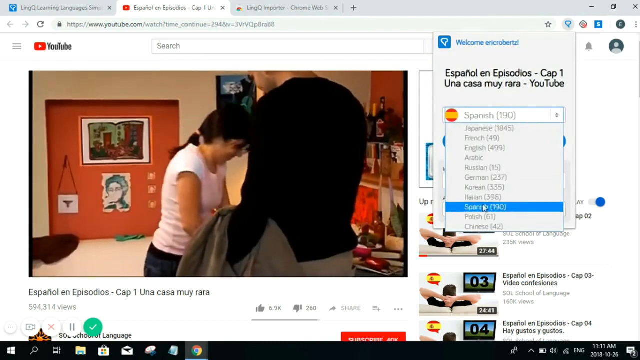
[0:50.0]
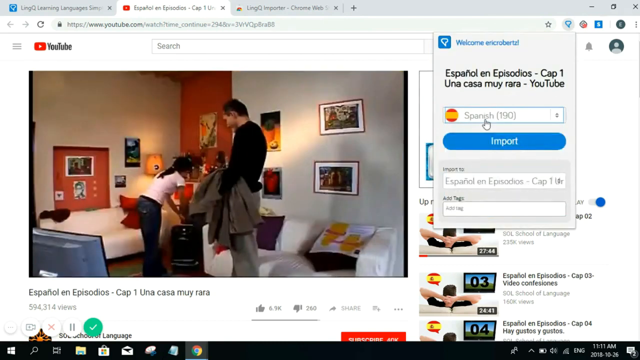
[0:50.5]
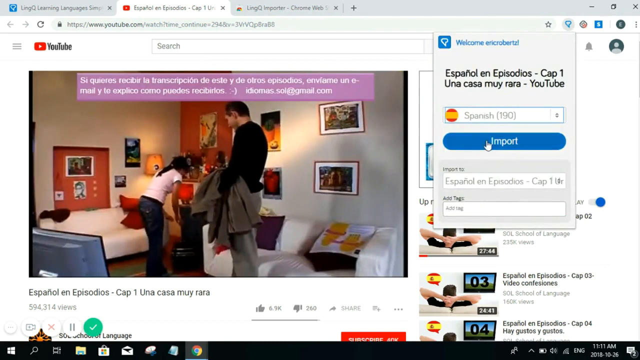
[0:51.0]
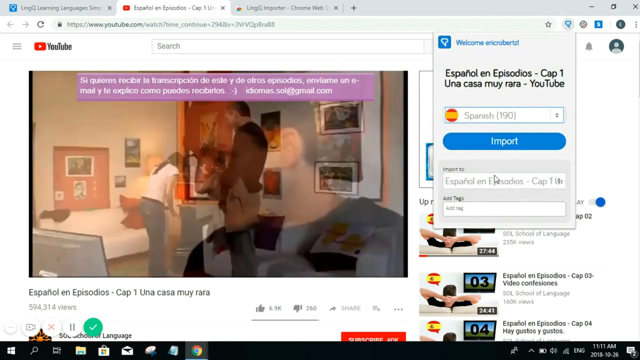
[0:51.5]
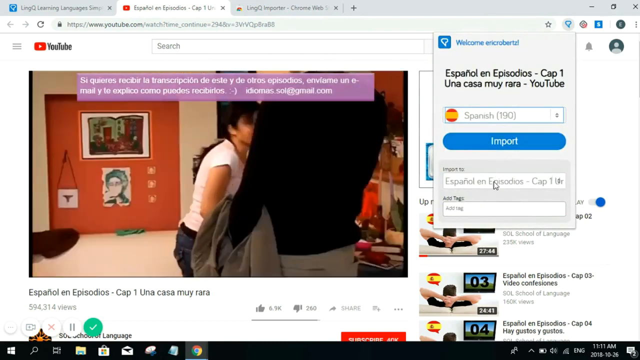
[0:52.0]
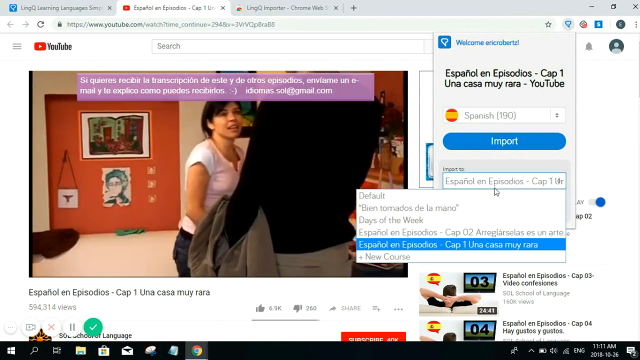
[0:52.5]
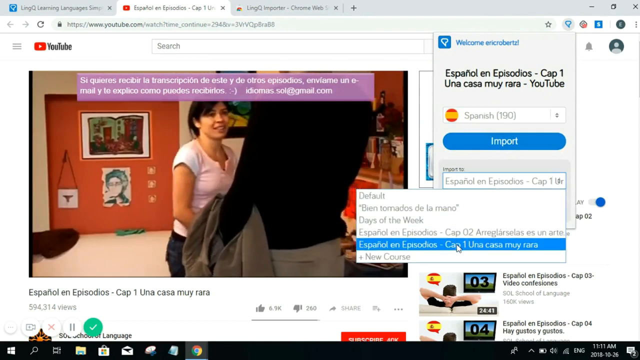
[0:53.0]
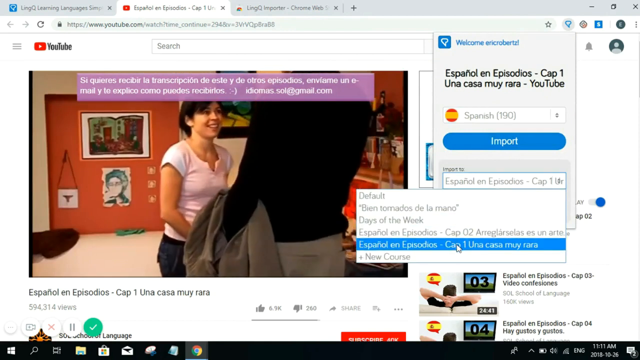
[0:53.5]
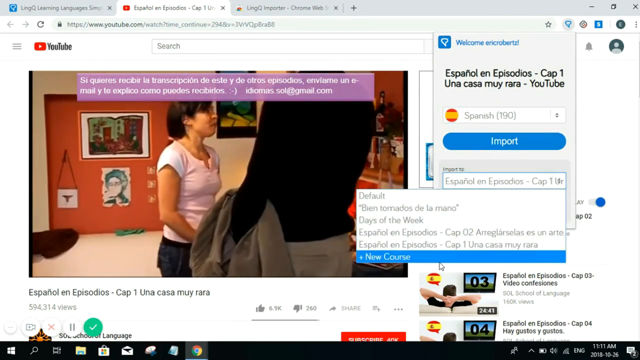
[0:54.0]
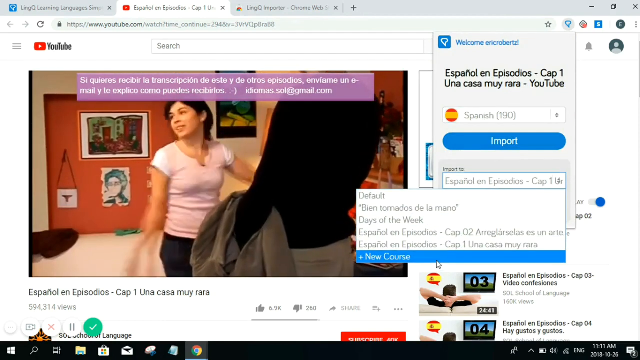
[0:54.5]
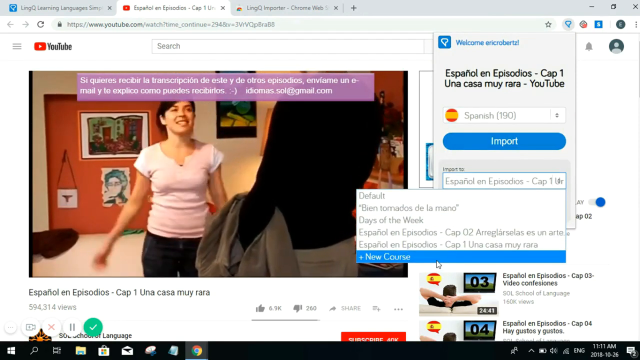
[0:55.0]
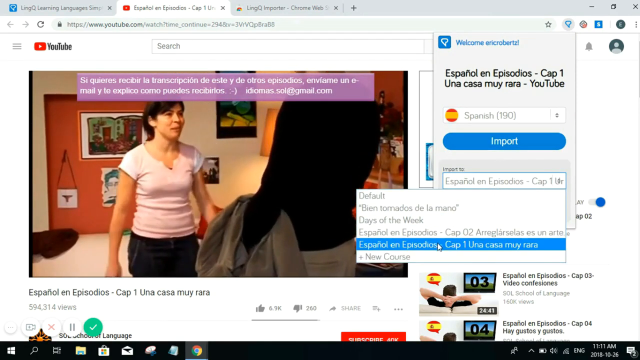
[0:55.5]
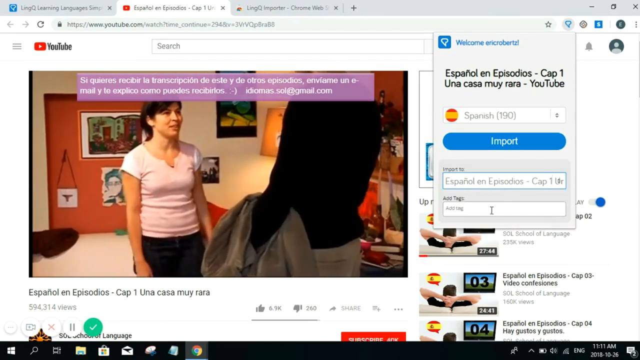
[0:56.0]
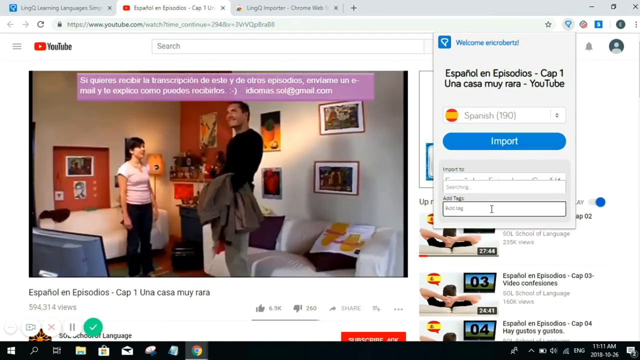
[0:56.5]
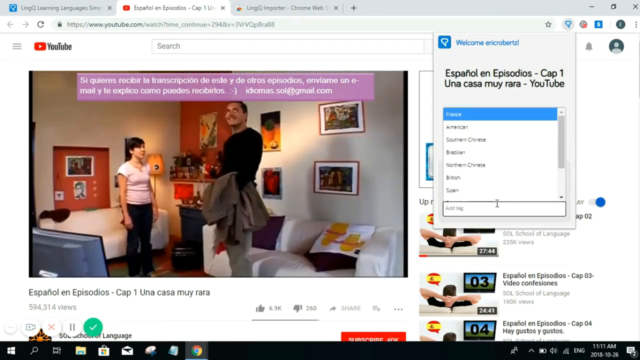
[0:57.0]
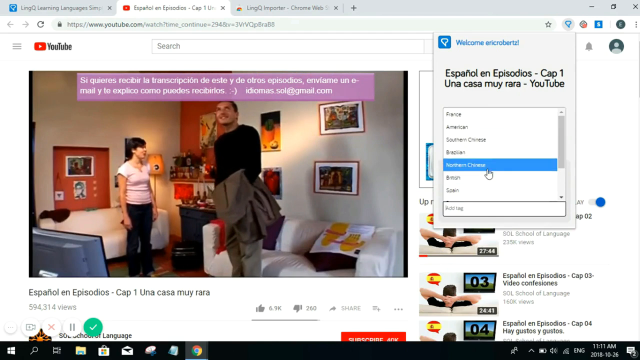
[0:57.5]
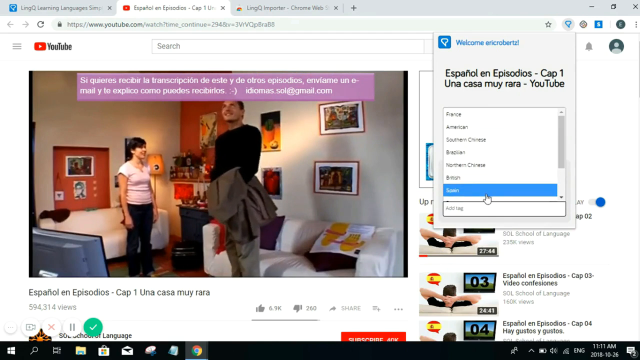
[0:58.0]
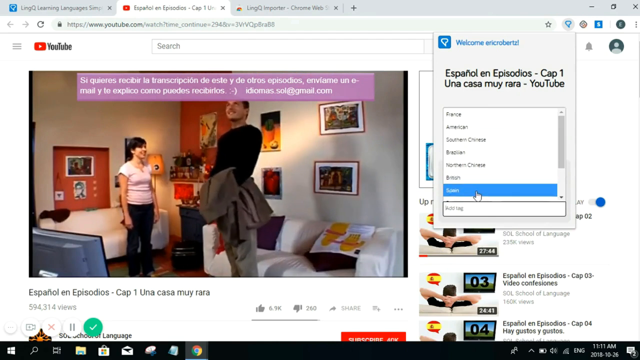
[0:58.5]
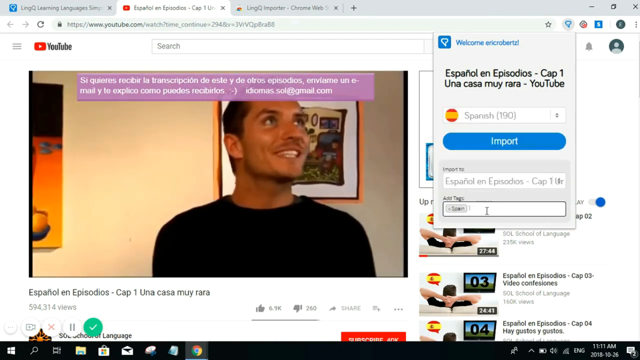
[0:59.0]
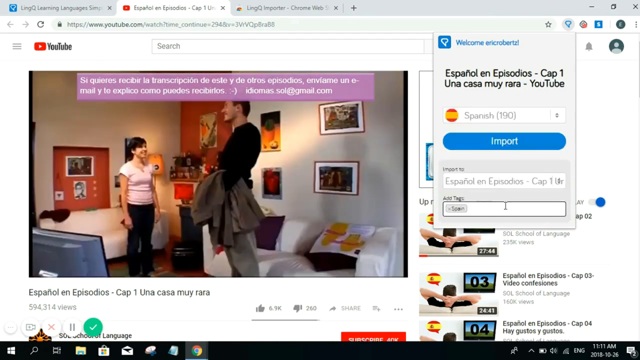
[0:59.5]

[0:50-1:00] The Spanish show is playing on YouTube again, and the person appears to be using the Lingq browser extension. He selects Spanish, hits import, and then chooses which episode he wants to import. He also has options to add tags. The show features a man and a woman: the woman wears black pants and a pink sleeveless blouse, and the man wears what appear to be tan pants and a long-sleeved black shirt.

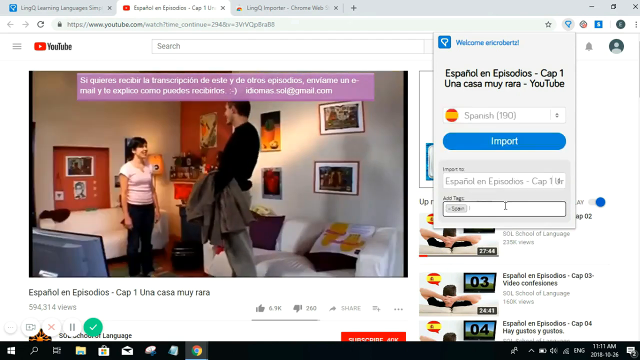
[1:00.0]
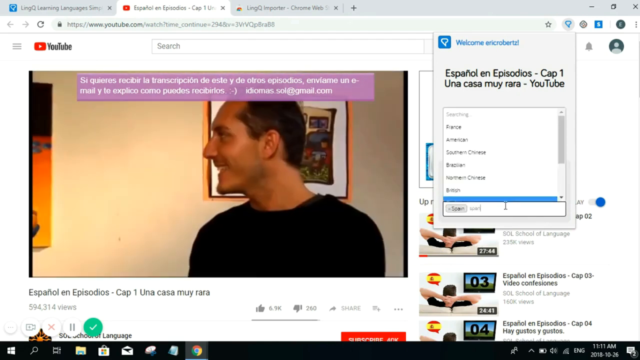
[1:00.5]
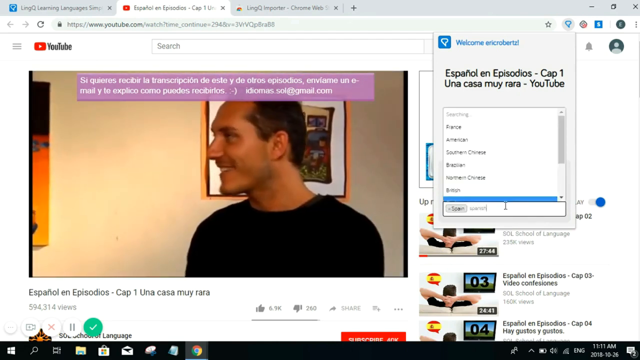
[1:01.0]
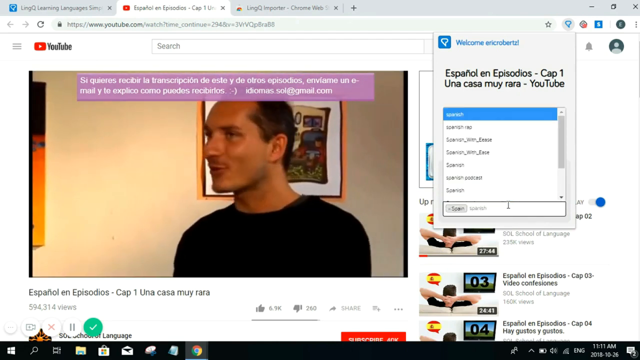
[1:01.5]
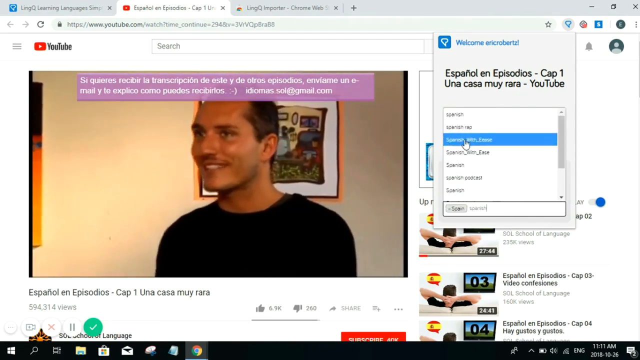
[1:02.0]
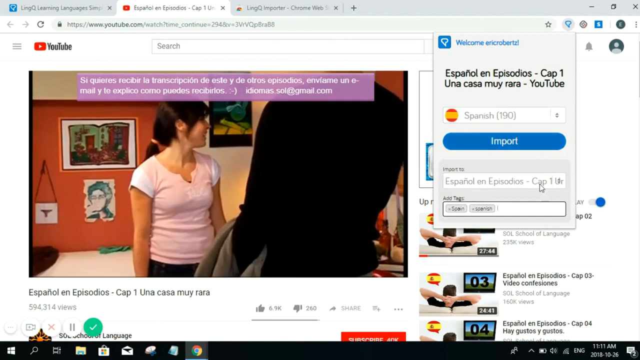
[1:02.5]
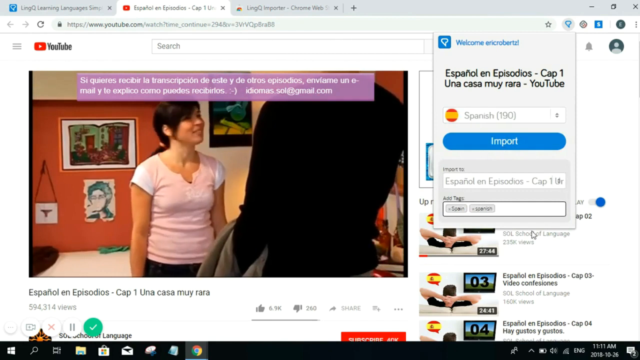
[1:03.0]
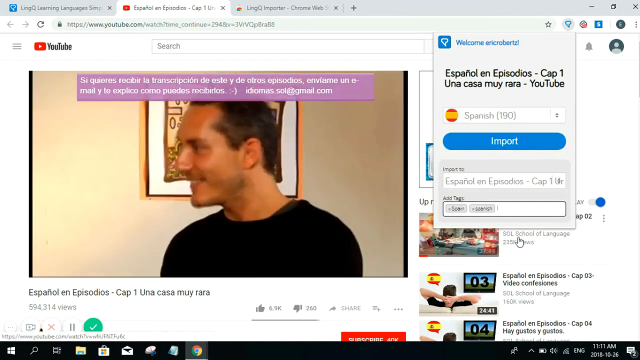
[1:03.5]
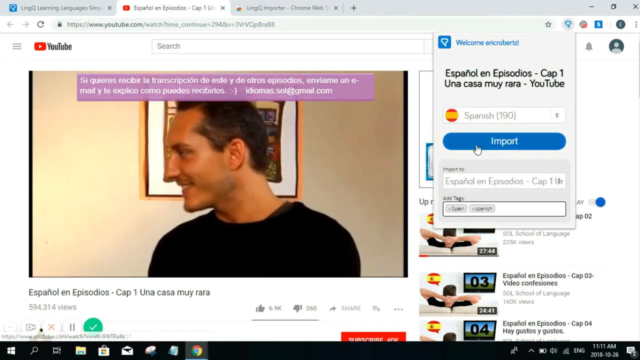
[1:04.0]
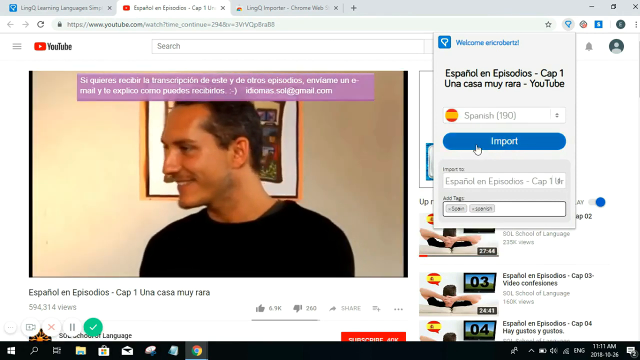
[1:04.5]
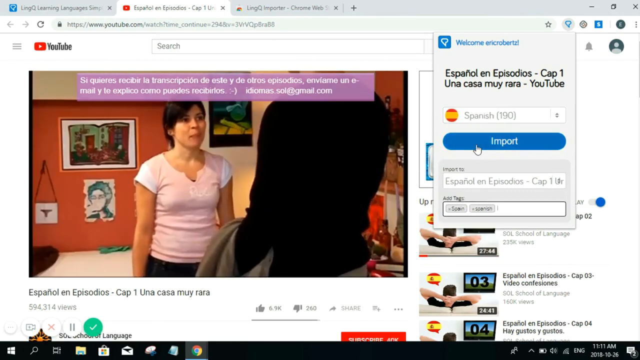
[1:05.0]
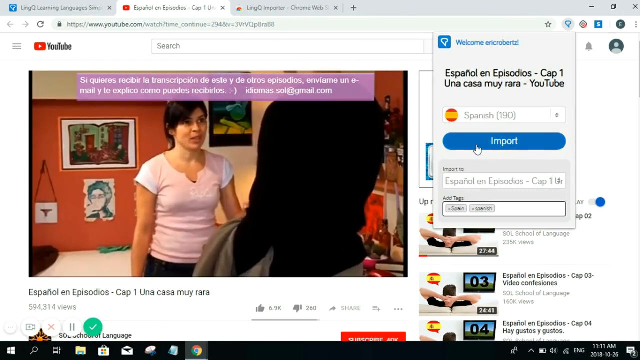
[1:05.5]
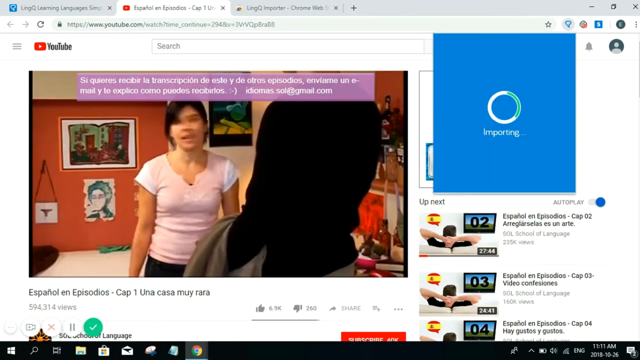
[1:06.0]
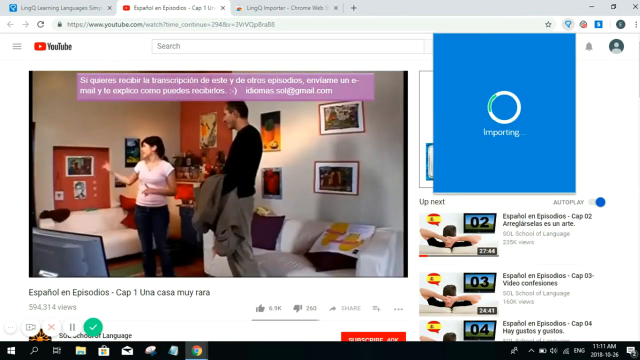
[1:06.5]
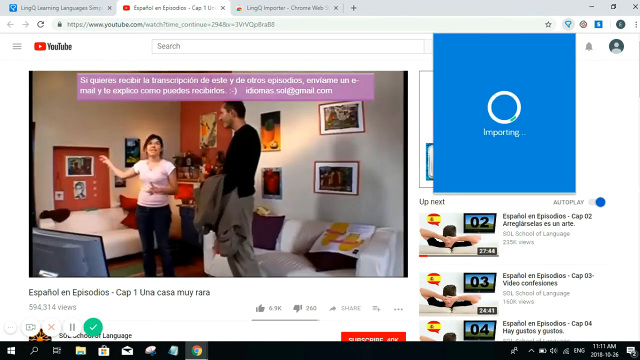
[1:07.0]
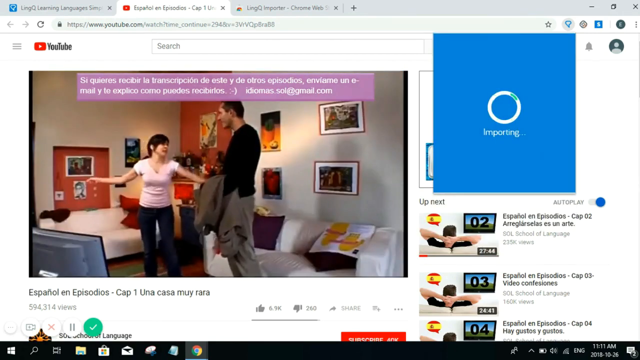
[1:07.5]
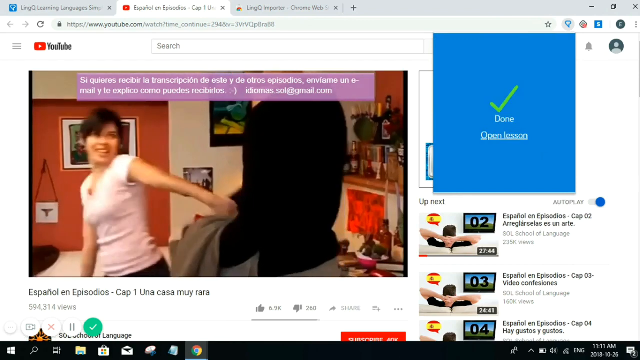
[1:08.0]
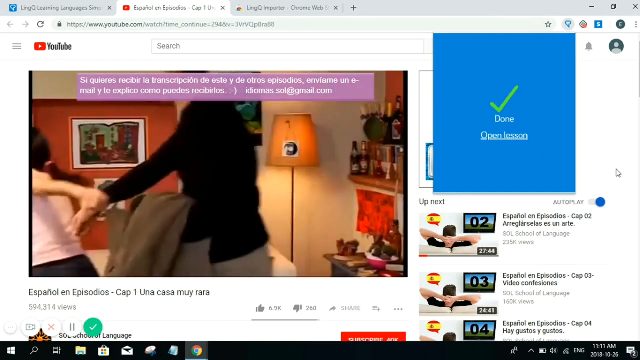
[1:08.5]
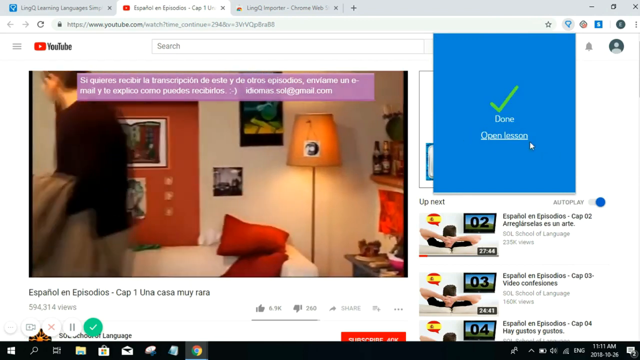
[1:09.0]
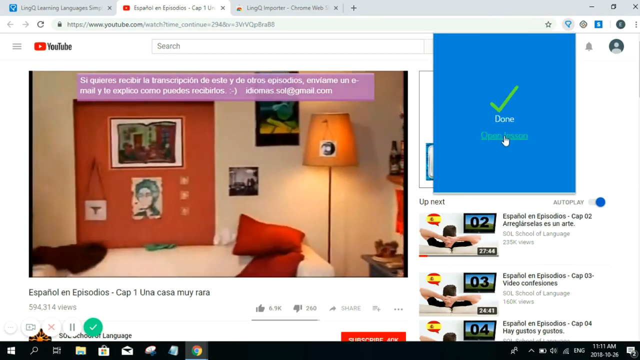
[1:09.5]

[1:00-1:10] The person adds two tags to the episode he is importing, though their text is not legible. He clicks import, and a blue square pops up showing that the chosen lesson is importing, followed by a green check mark with "done" and a link that says "open lesson." He clicks the link to open the lesson. In the show, the man wears a long-sleeved black shirt and gray trousers and holds a coat folded over his forearm. The two talk in what looks to be the living room of an apartment or house and seem friendly. She points at everything around the living room, then grabs him by the hand and leads him to the bedroom. Many artworks hang on the walls of the apartment; they vary a lot, no two alike, and look largely contemporary.